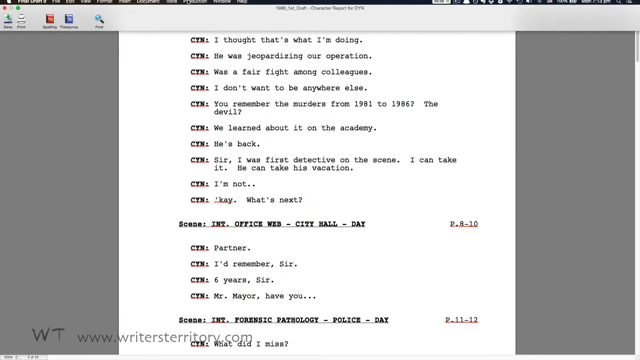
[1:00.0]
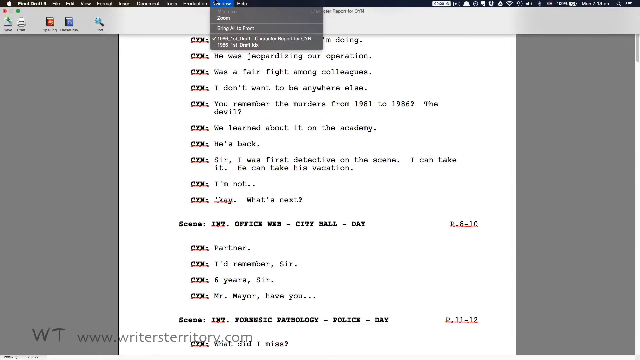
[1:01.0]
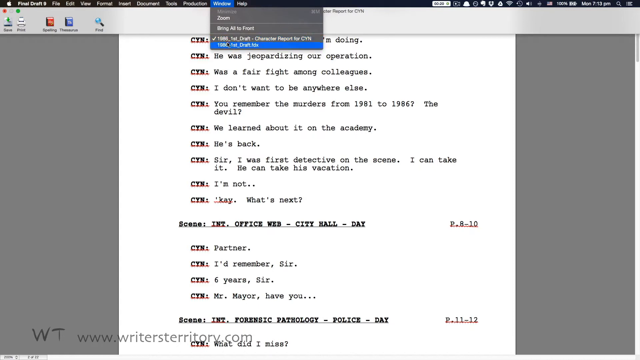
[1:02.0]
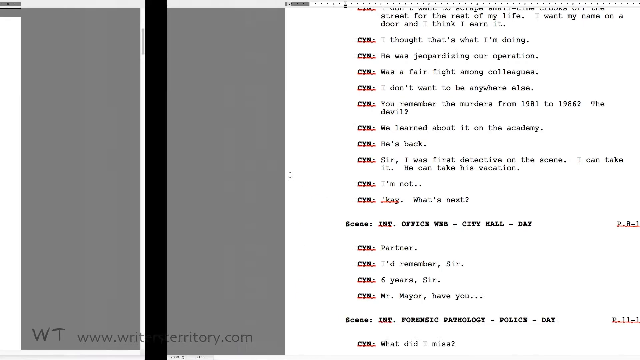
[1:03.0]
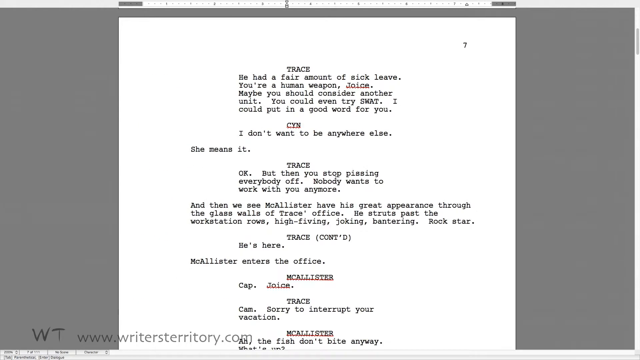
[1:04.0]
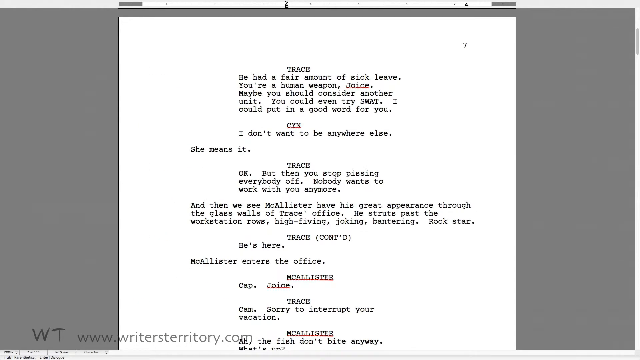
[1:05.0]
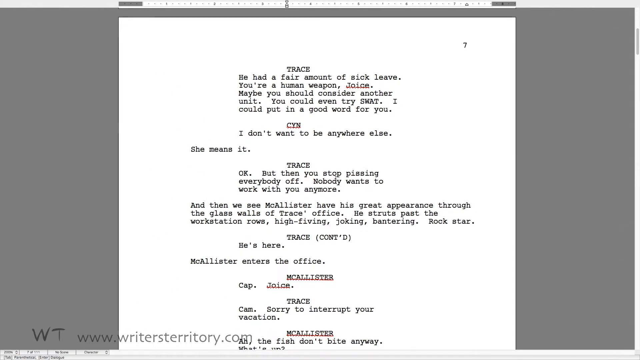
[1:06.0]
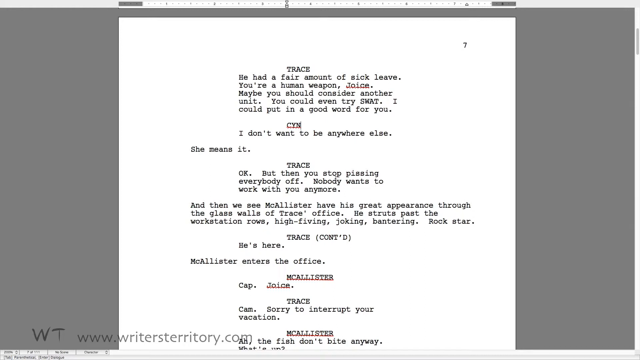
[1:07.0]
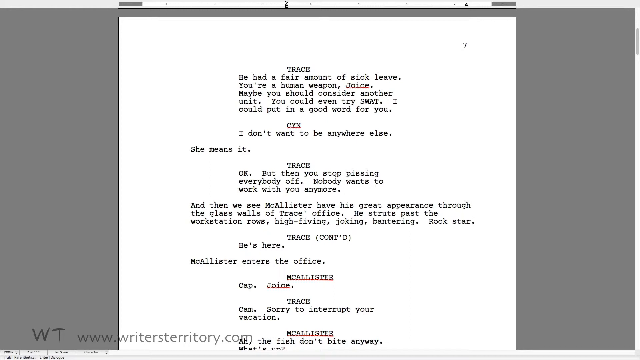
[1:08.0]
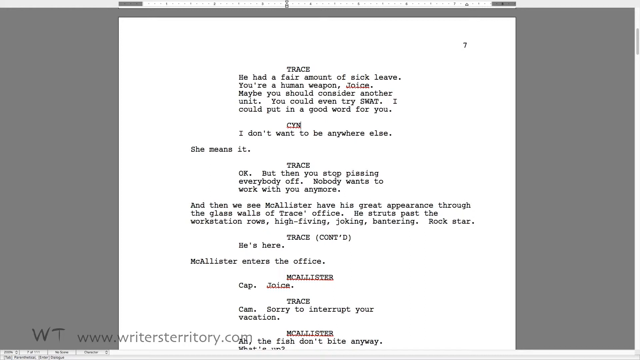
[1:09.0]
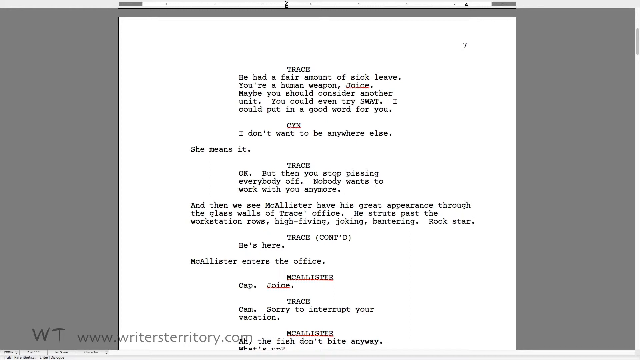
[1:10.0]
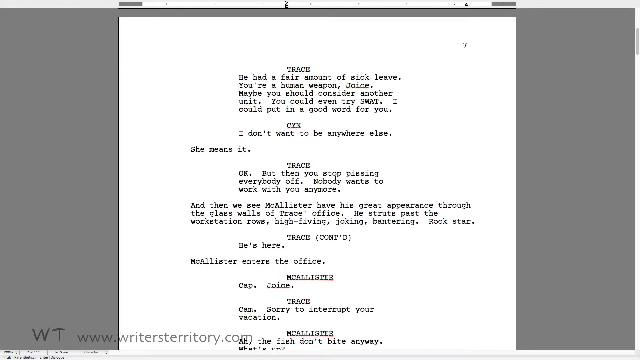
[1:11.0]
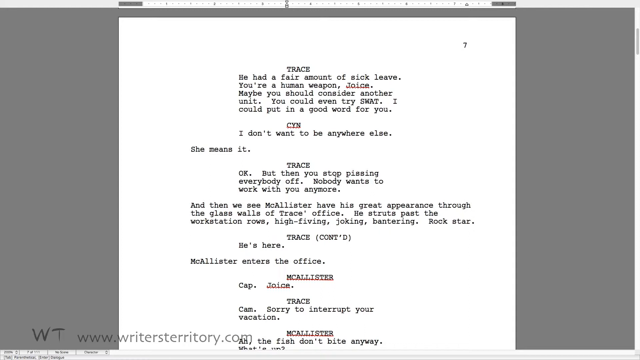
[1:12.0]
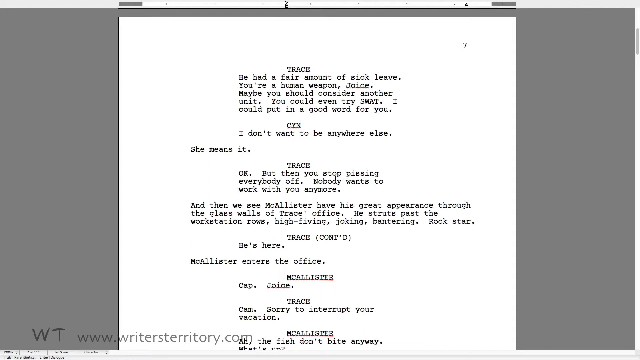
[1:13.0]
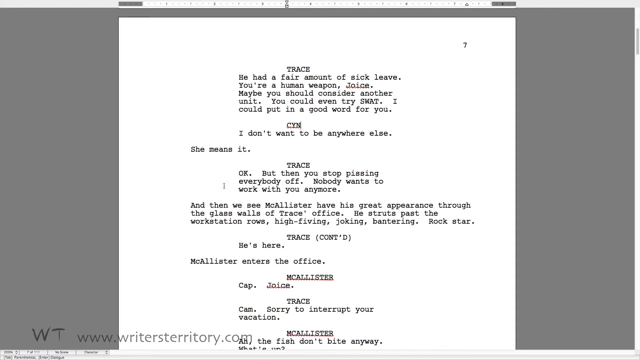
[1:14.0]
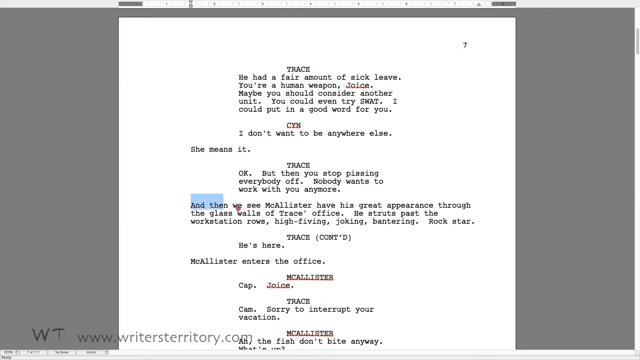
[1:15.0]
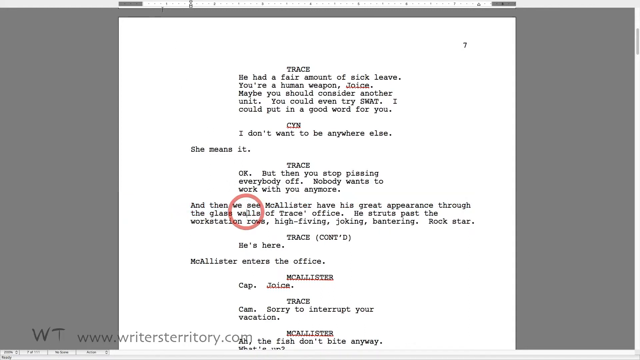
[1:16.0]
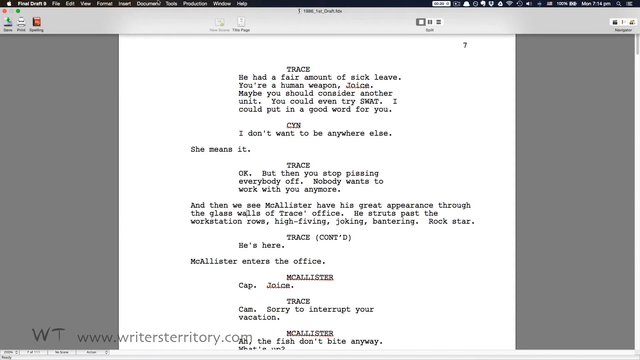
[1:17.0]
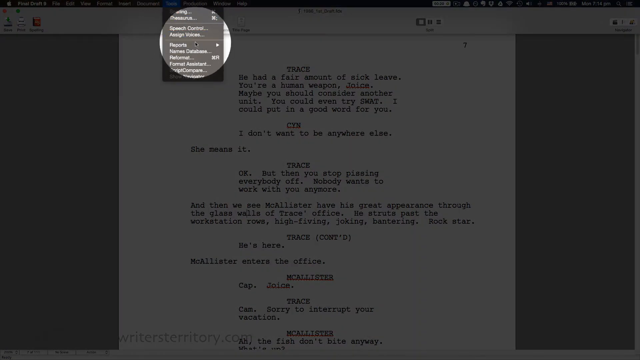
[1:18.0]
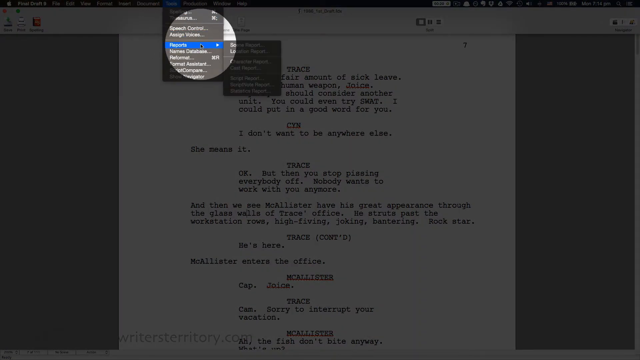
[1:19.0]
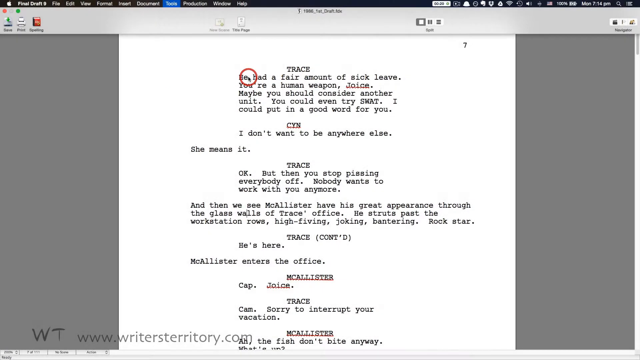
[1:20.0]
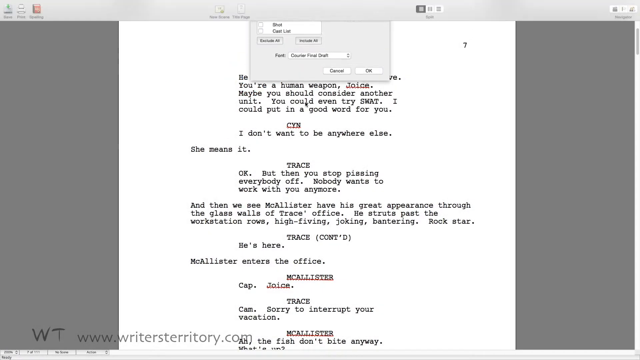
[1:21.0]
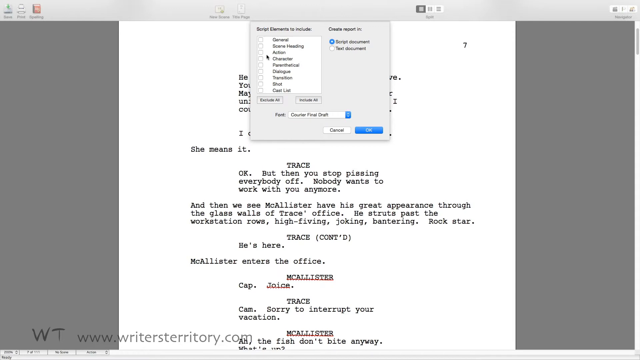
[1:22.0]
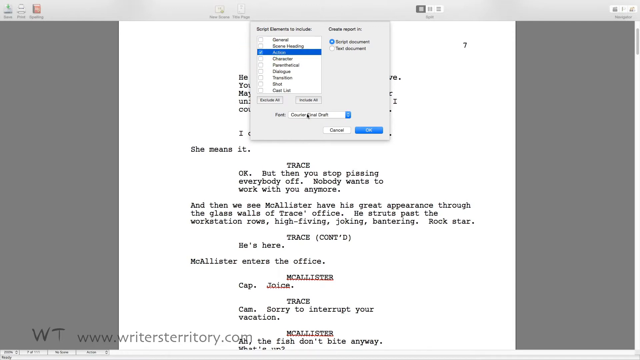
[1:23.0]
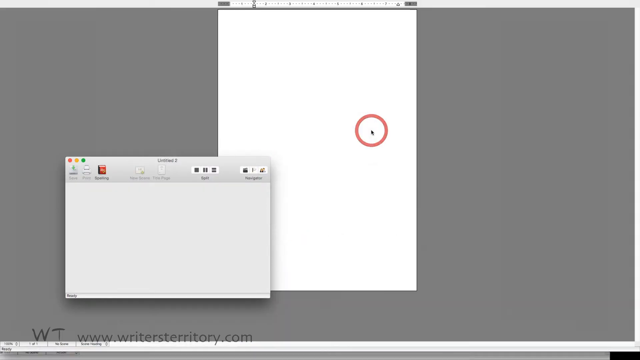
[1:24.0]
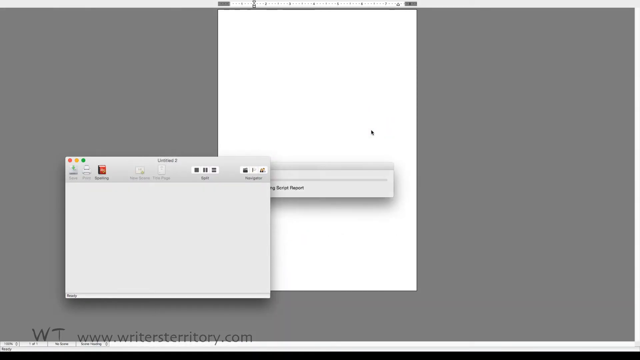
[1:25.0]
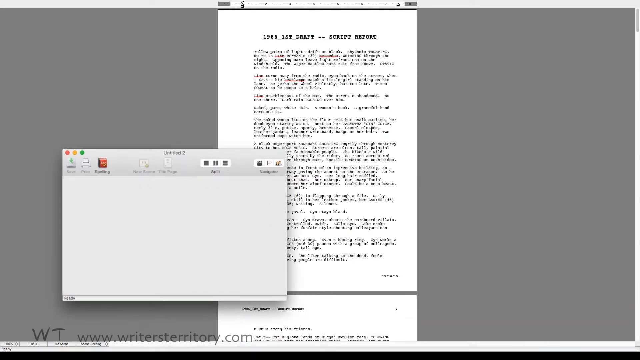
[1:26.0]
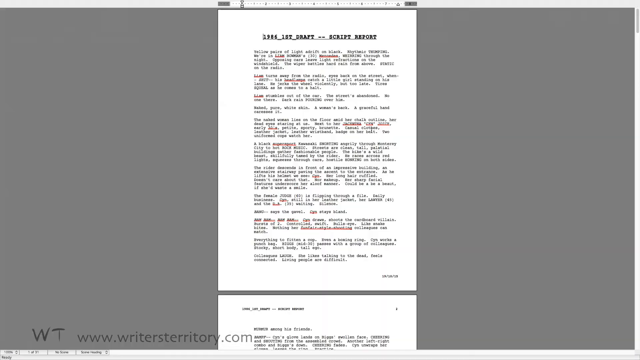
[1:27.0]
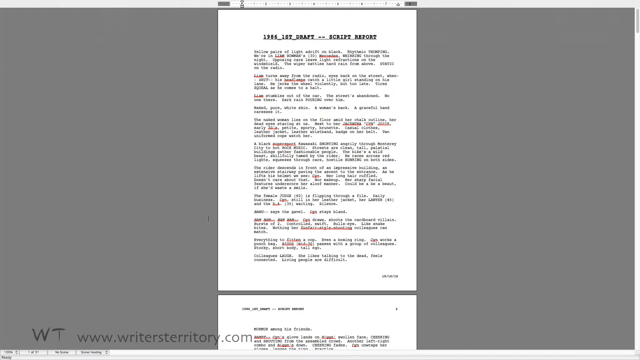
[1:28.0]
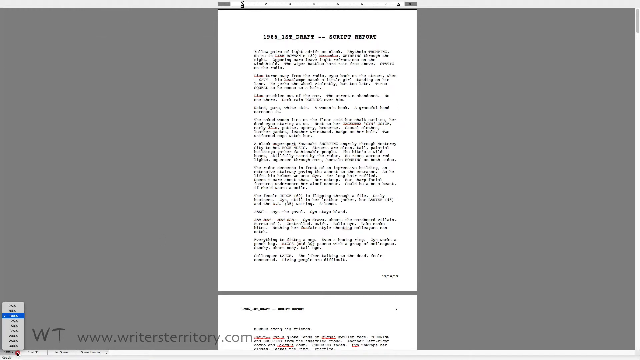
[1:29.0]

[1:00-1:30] The user apparently goes to the "window" menu at the top. A drop-down opens with several options: the first, "minimize", is grayed out, followed by "zoom", "bring all to front", and a checkmarked "character report by CYN". He goes to the bottom option, a draft file apparently ending in ".FDX", and clicks it, returning to the document from the start of the video, with "trace" at the top and page 7. The view stays on this page with nothing changing, while the cursor pulsates to the right of "CYN". He then highlights the non-indented block beneath "McAllister". Next he returns to the menu list, goes down to reports, and clicks "script report". A box appears with "script elements to include" at the top and a gray area of checkboxes such as "general" and "action". He clicks "action" and then the OK button at the bottom right of the pop-up. A box about generating reports appears. A white, zoomed-out outline is blank, with "untitled" to its left. The view zooms in on the notepad, revealing the first draft script report with its typed text.